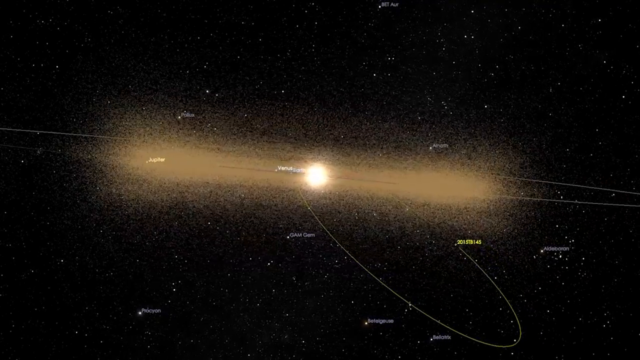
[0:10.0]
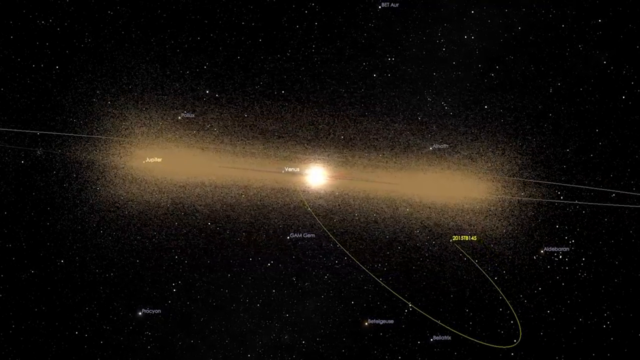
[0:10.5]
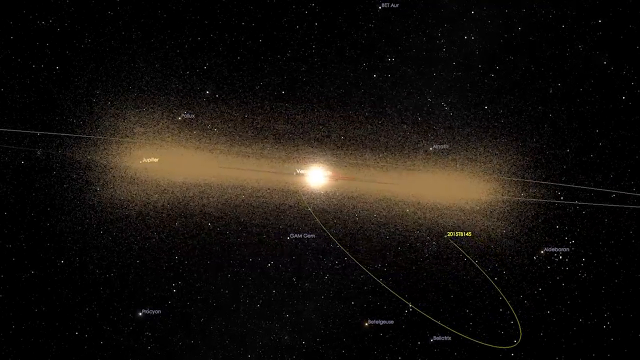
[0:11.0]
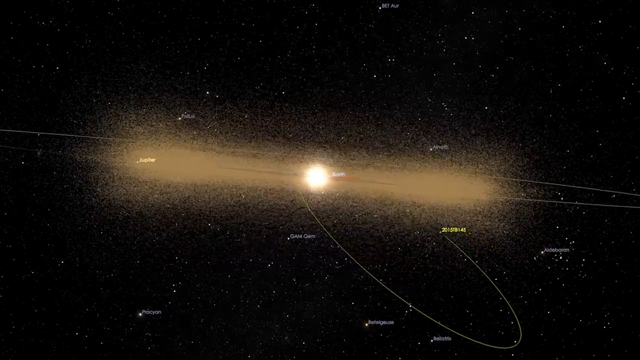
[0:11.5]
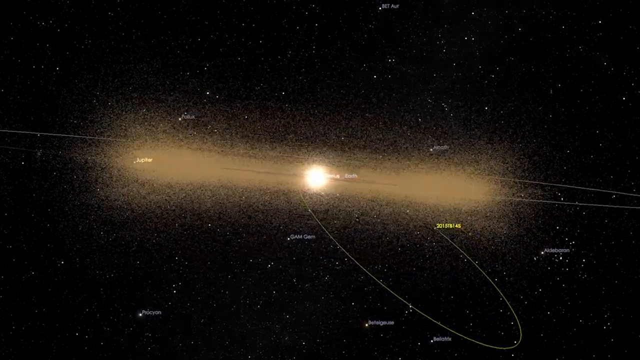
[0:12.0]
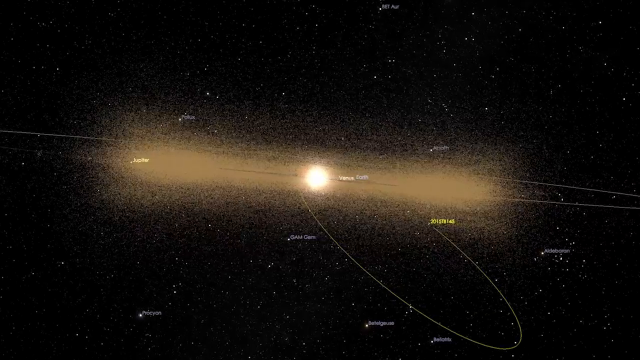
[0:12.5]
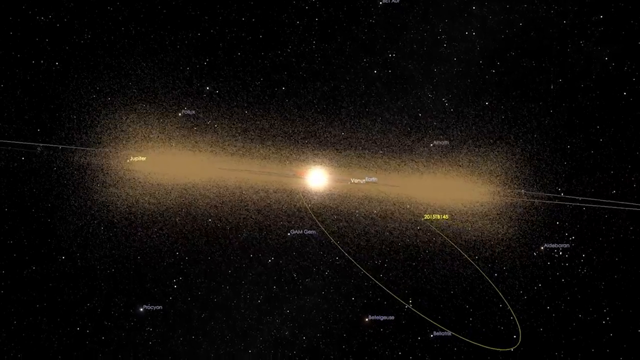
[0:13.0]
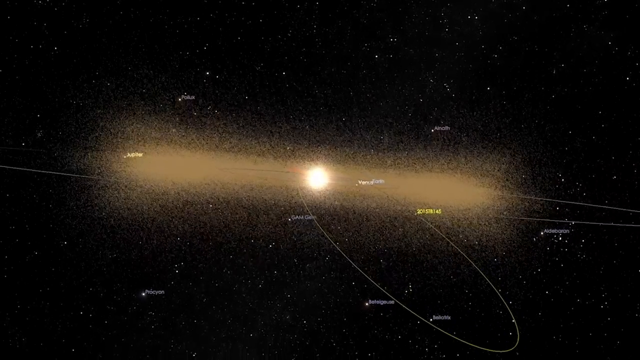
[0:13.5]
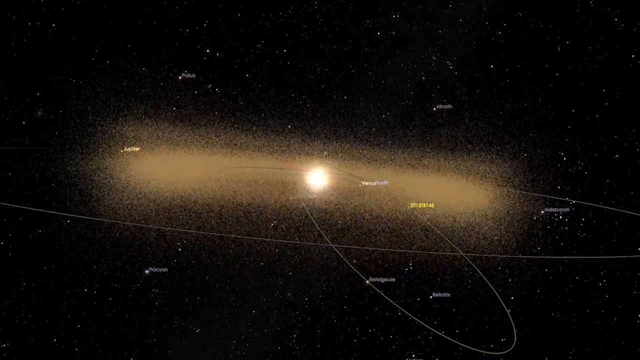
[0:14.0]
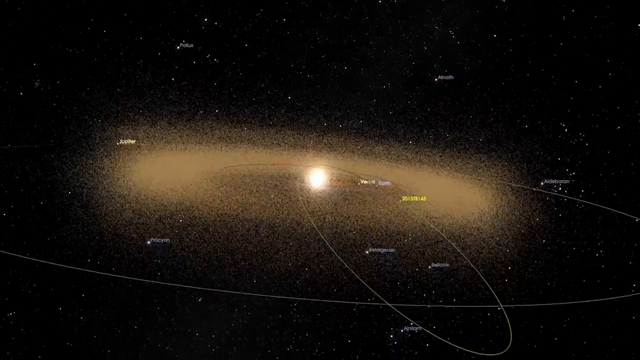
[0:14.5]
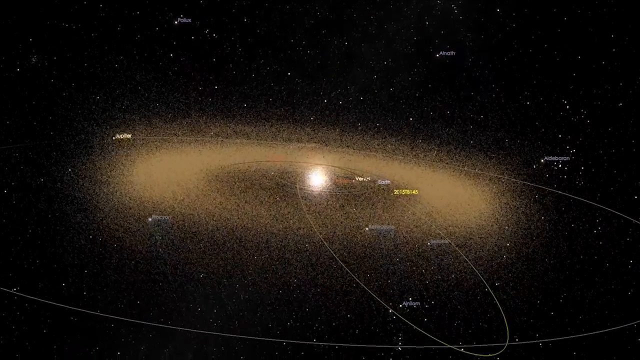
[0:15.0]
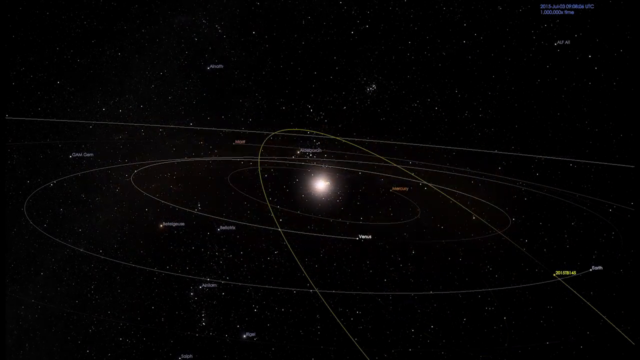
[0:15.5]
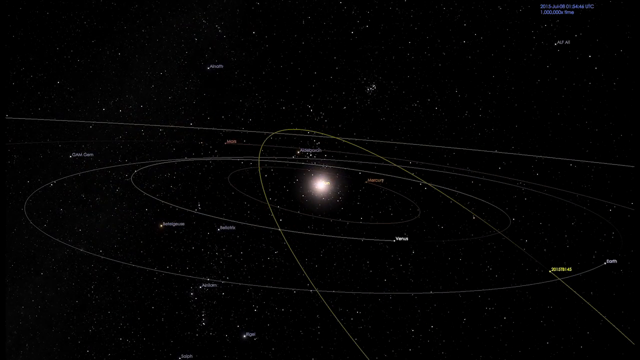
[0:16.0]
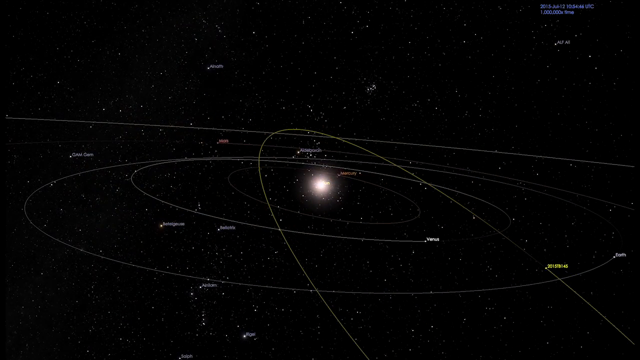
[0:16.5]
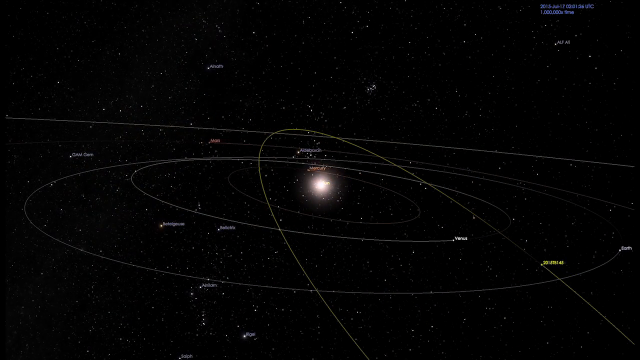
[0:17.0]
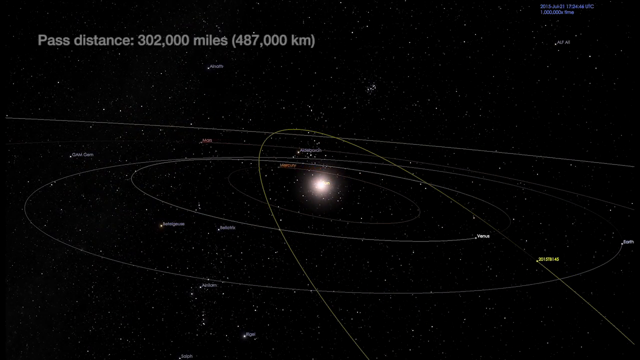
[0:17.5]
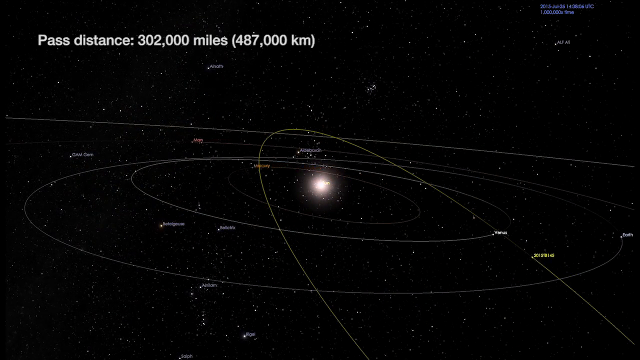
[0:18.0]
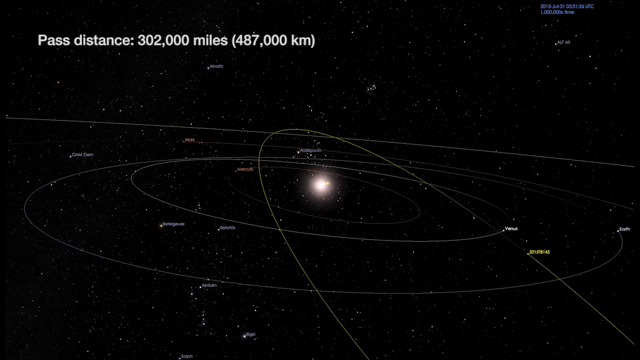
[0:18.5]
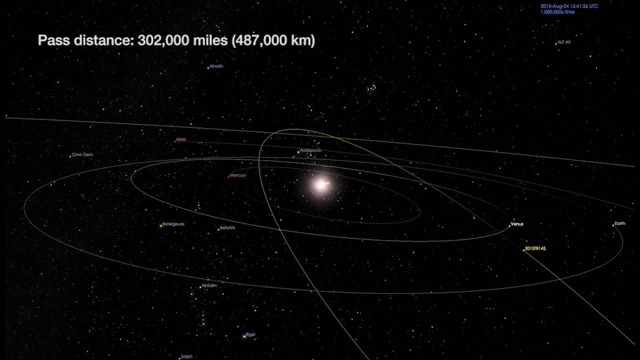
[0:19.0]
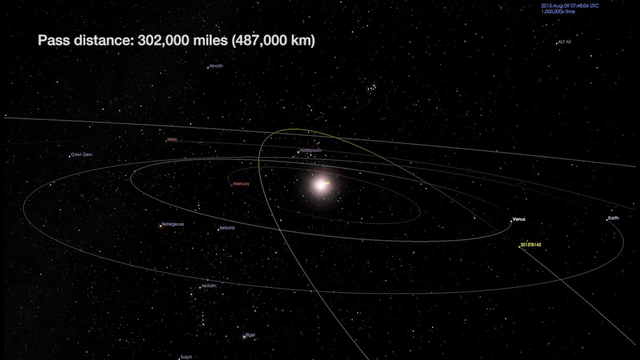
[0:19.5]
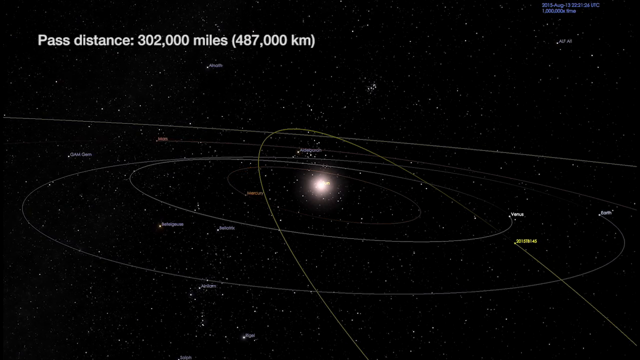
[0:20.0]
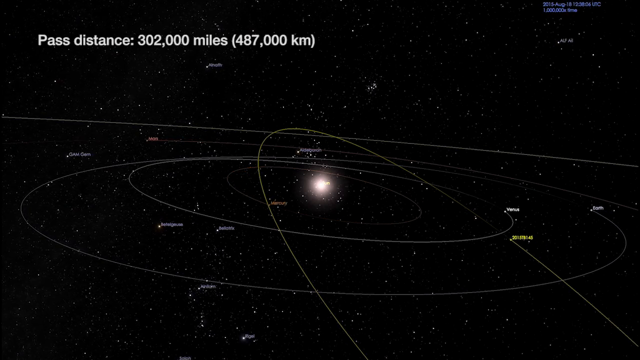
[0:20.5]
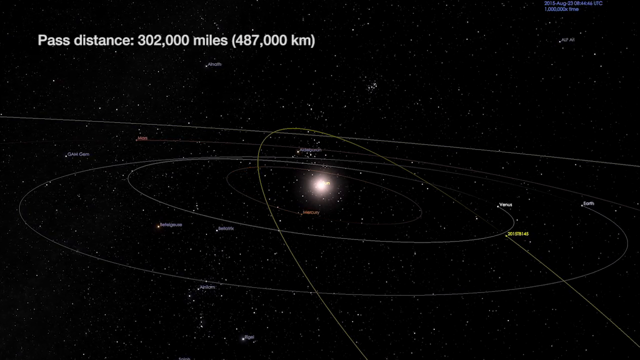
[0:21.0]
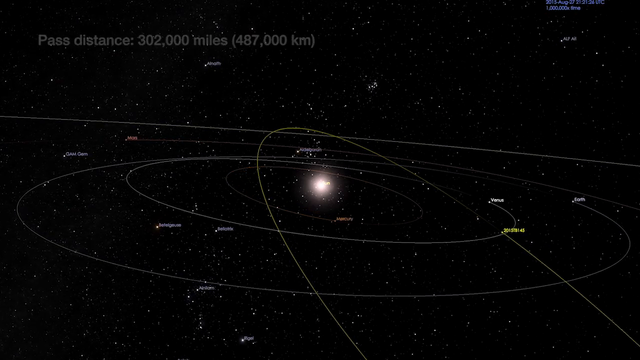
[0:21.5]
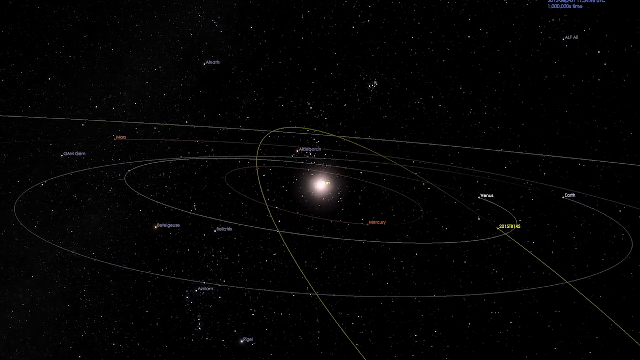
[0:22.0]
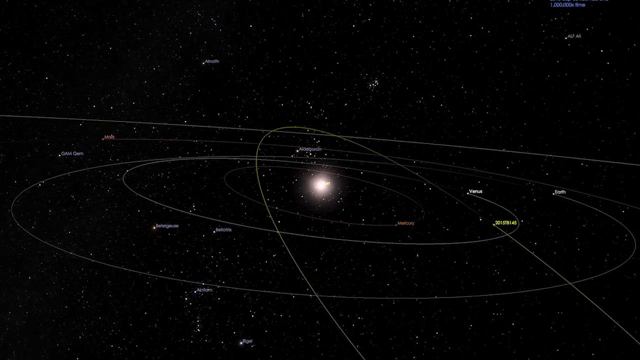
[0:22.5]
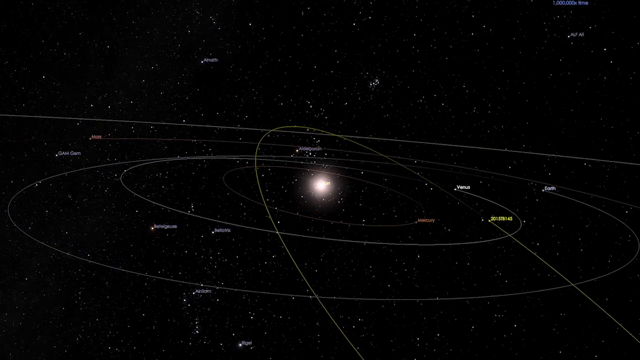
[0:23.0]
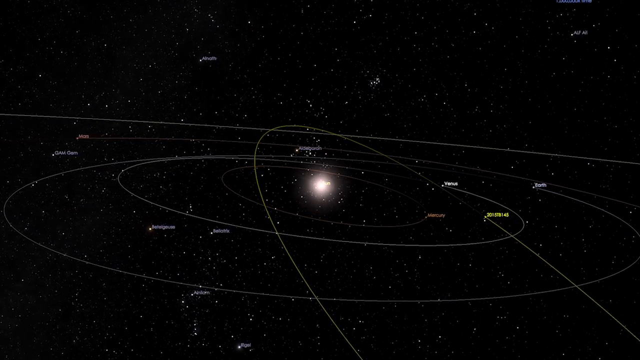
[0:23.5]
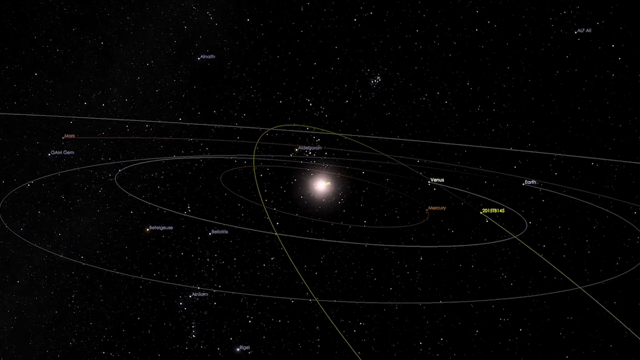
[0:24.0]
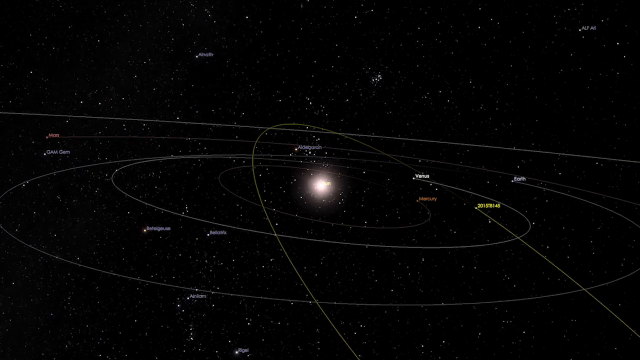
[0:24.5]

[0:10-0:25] The same graphic of the asteroid emanating light is shown, with the pathways now a little more clearly defined. There are two primary pathways, and text moves at various points along them, including "Past distance 302,000 miles". Varying distances are marked along the path, and the asteroid seems to interact with various other objects along its path.